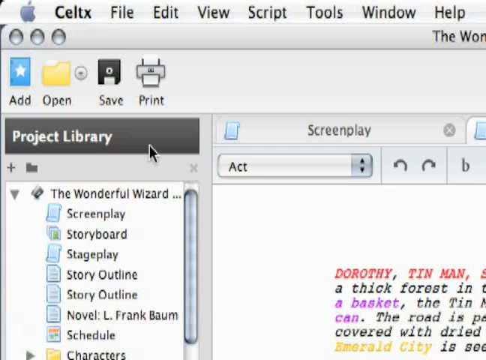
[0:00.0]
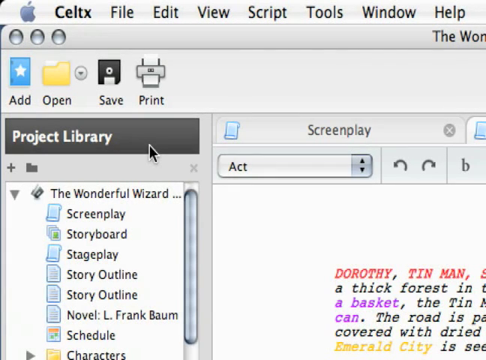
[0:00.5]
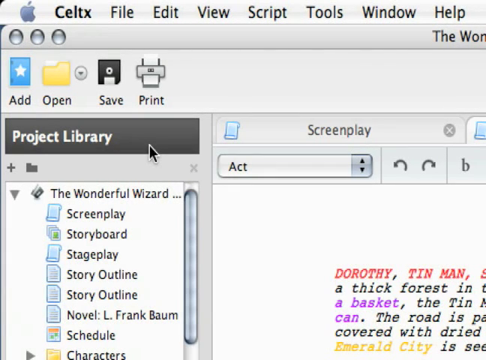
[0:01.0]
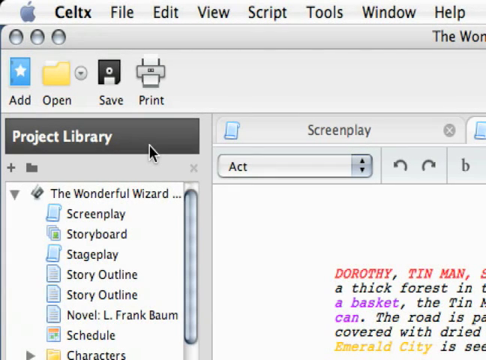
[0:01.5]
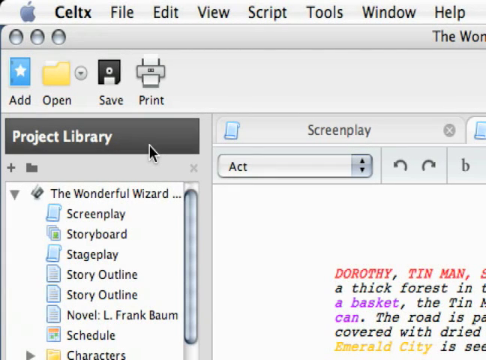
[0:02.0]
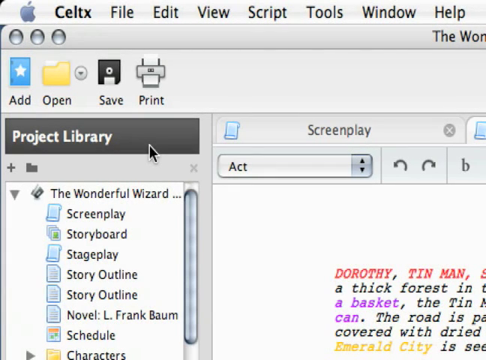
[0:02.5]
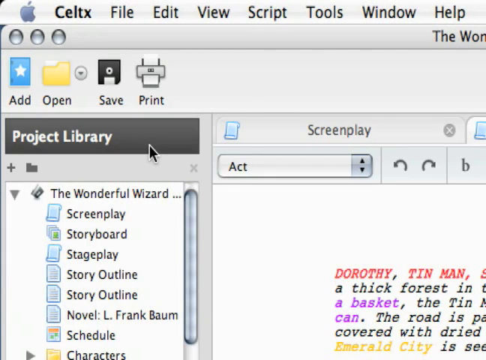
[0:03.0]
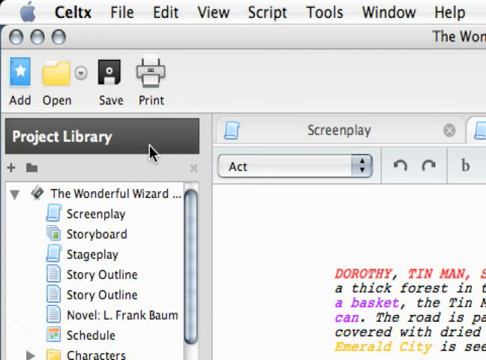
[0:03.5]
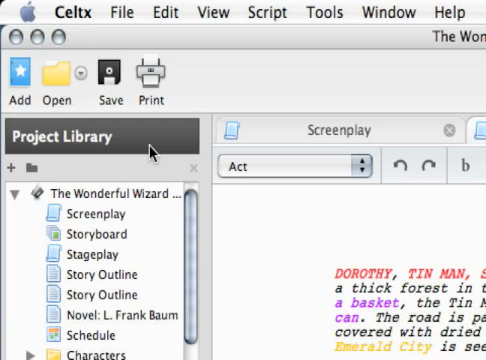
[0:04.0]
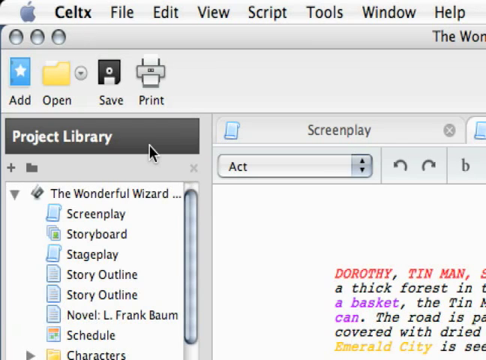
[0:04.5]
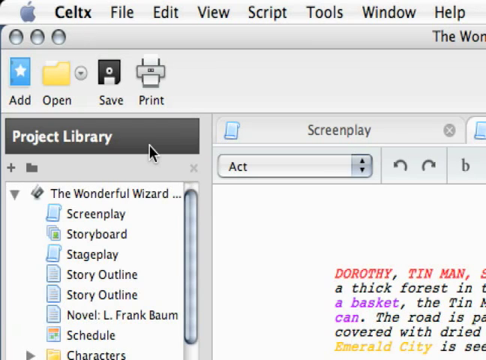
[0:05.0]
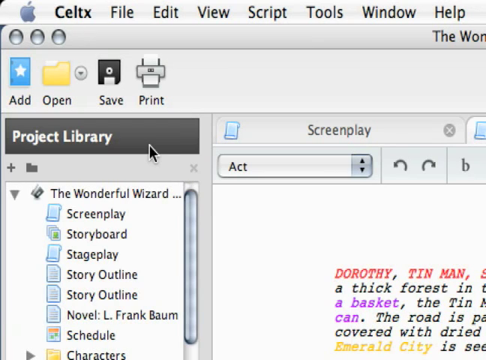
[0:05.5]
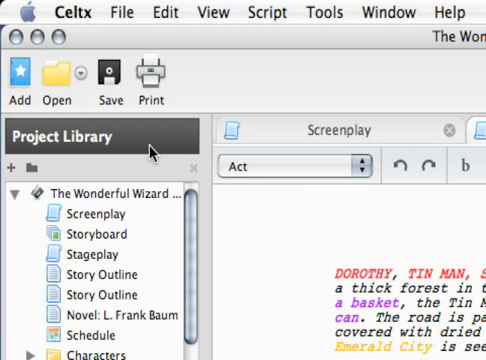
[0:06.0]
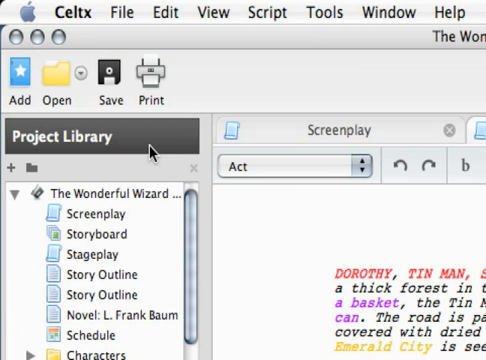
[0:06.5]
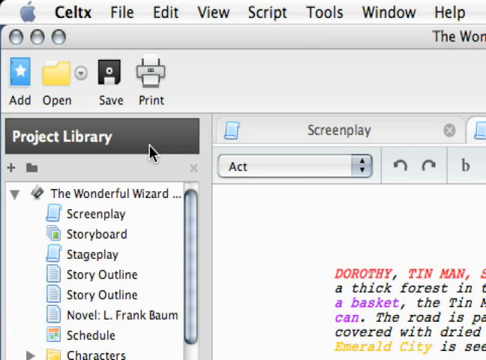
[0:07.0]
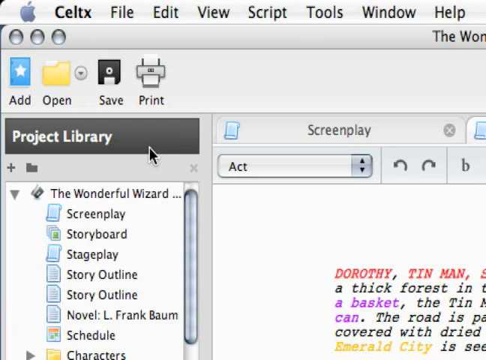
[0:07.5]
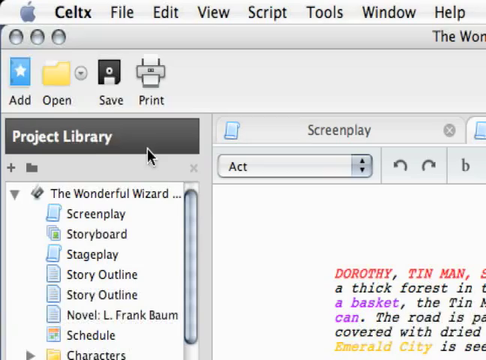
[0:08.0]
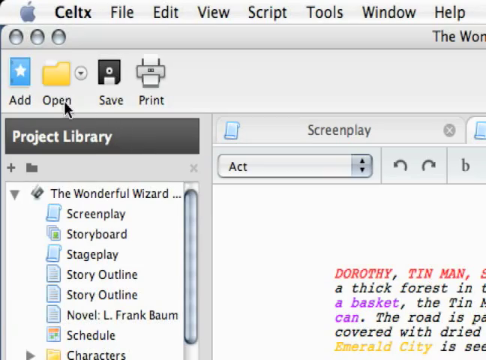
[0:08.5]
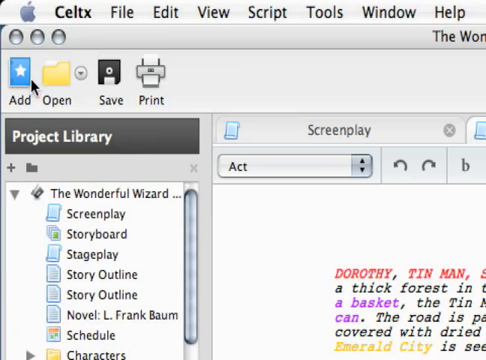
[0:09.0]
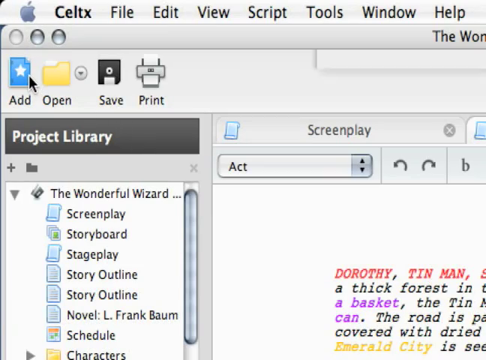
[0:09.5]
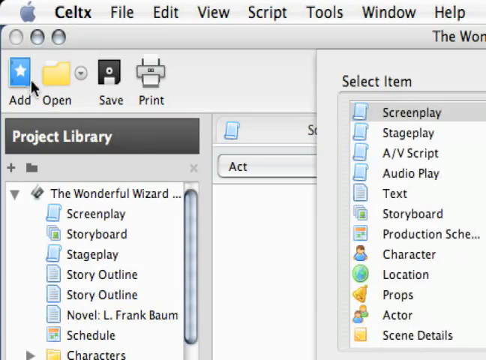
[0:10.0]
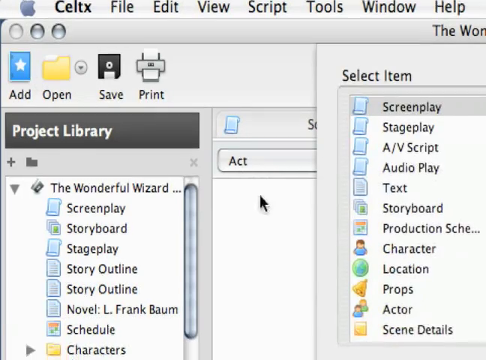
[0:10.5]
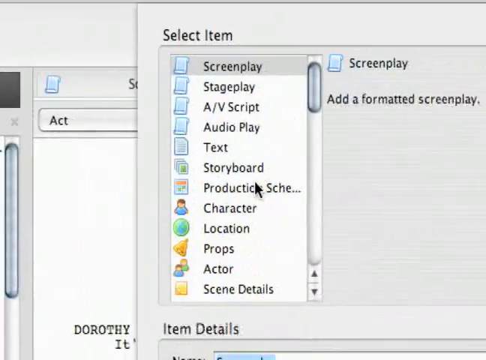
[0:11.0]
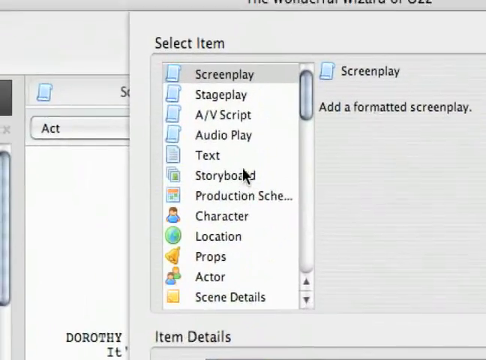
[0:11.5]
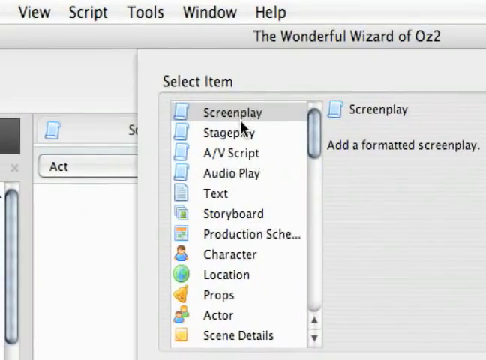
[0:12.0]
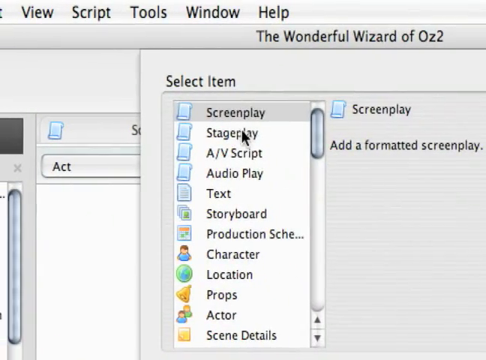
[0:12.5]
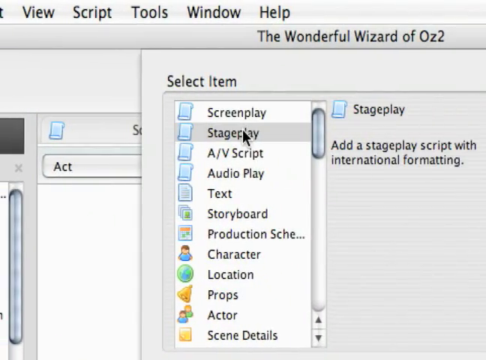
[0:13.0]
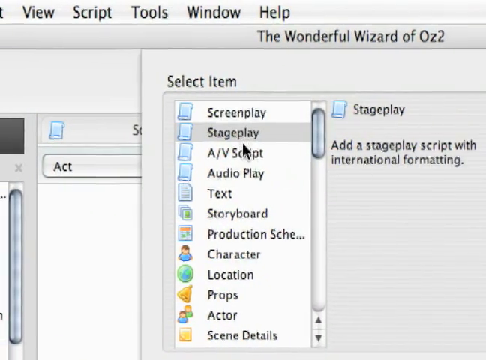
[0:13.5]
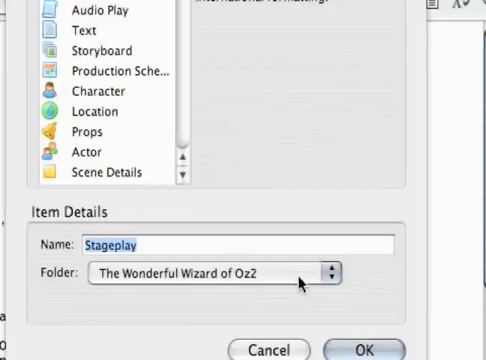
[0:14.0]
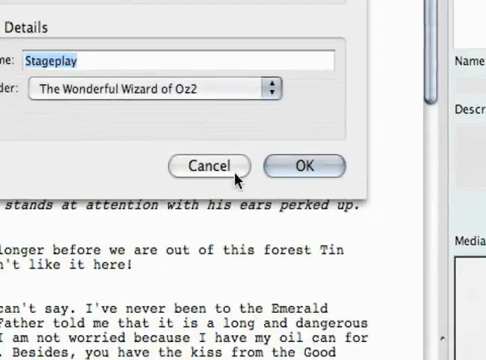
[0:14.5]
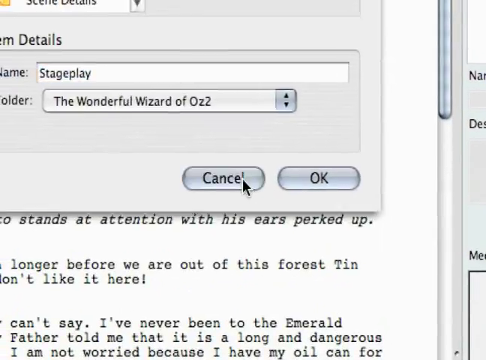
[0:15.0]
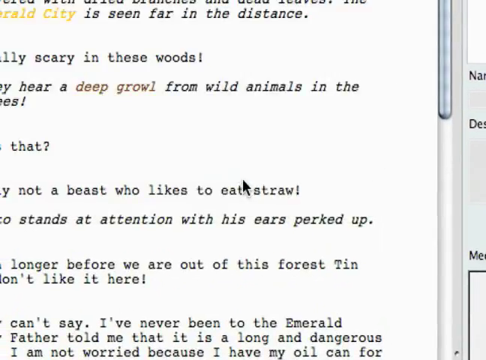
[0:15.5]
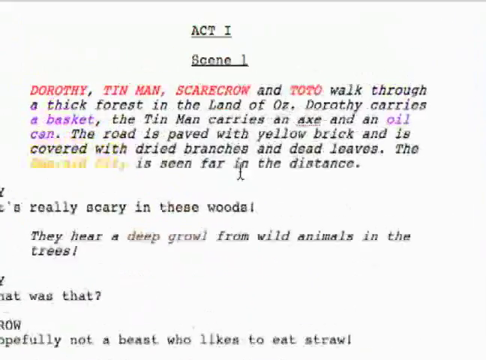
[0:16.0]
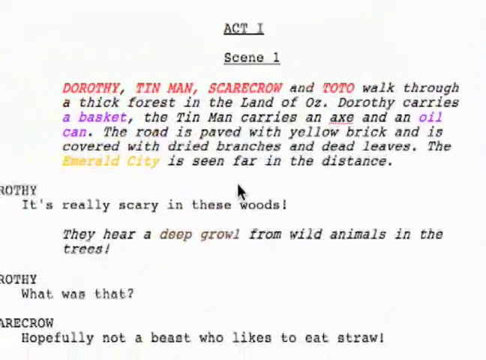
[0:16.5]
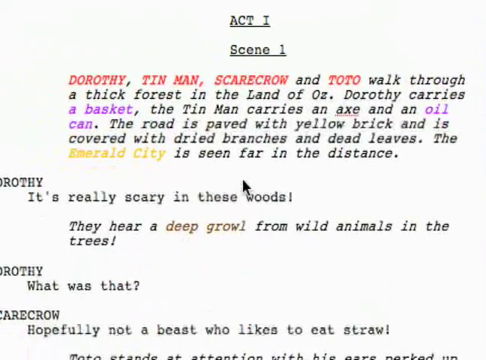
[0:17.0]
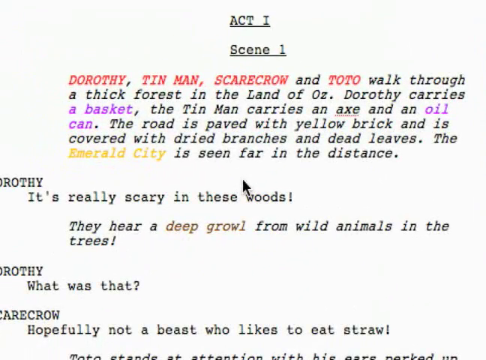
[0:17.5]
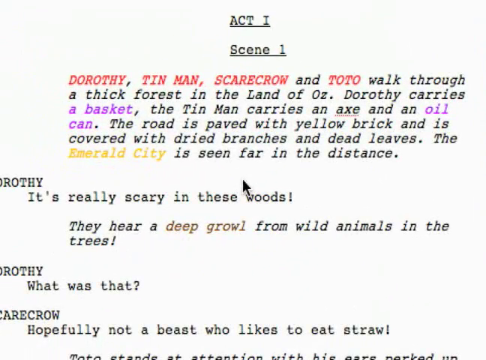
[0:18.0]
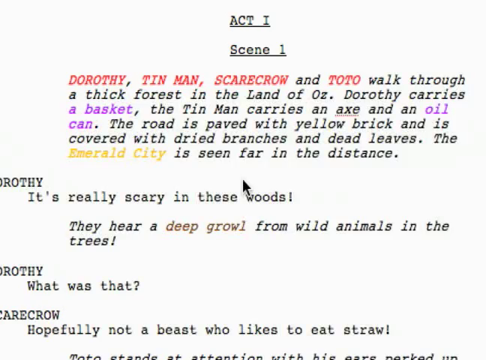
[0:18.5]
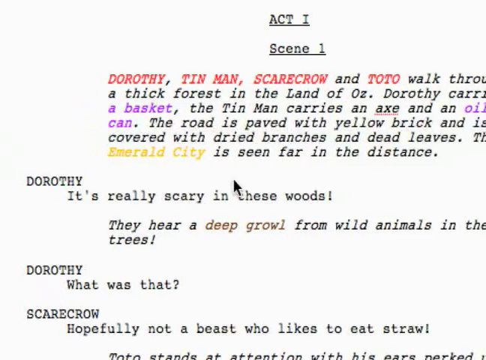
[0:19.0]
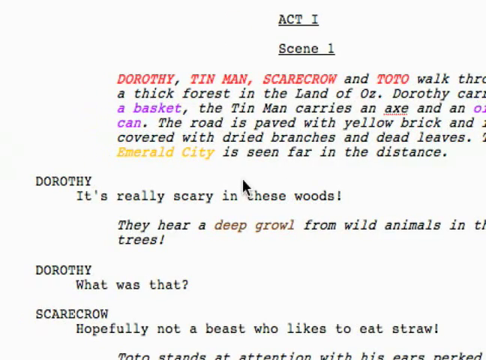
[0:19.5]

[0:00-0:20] The upper left corner of an Apple OS screen shows the top Apple bar with the Apple logo, then CeltX, File, Edit, View, Script, Tools, Window and Help. Below it is an open window with three little dots in its upper left, showing part of the title of The Wonderful Wizard of Oz. The open document is a story outline of The Wonderful Wizard of Oz. A series of buttons runs along the top left: Add, a blue rectangle with a white star; Open, a folder; Save, an image of a floppy disk; and Print, an image of a printer. The black cursor clicks the Add icon, and a window opens on the right with a list of documents for the Wizard of Oz: screenplay, characters, locations, prompts and actor. The view shifts to show that window in more detail, then the camera shifts upward, revealing the document title "The Wonderful Wizard of Oz 2". The cursor clicks Screenplay, then Stageplay, and each is highlighted in gray. The camera scrolls down to the bottom right corner of the window and the cursor clicks Cancel. The view then shows the script of Act 1, Scene 1 of The Wizard of Oz.